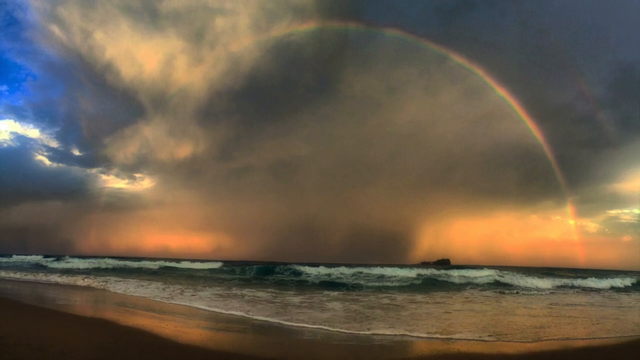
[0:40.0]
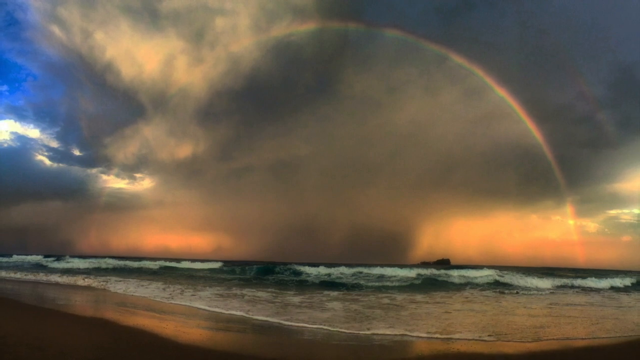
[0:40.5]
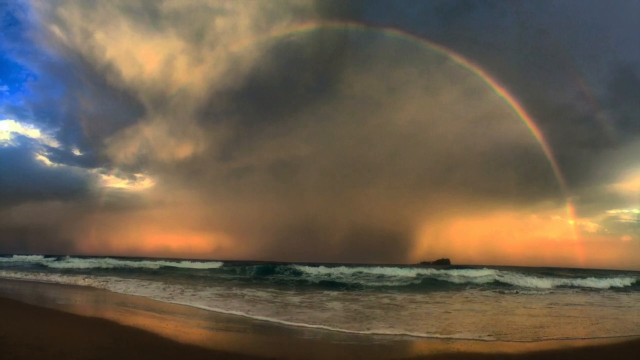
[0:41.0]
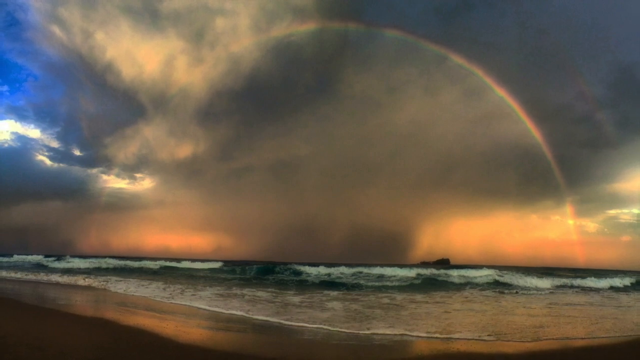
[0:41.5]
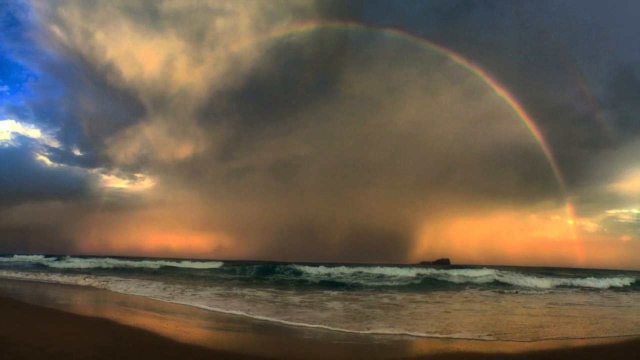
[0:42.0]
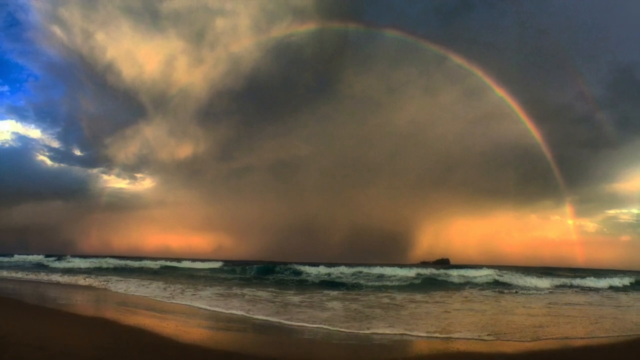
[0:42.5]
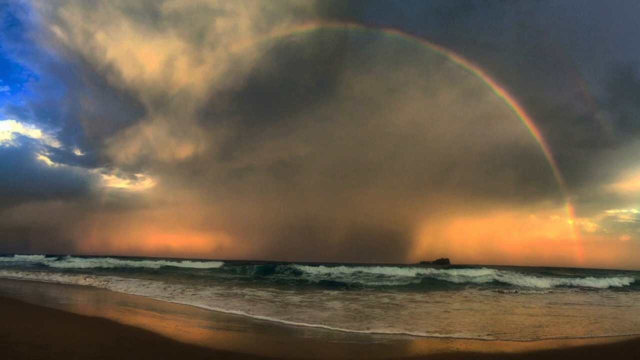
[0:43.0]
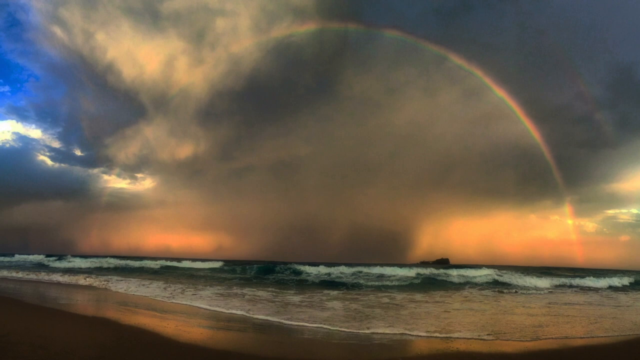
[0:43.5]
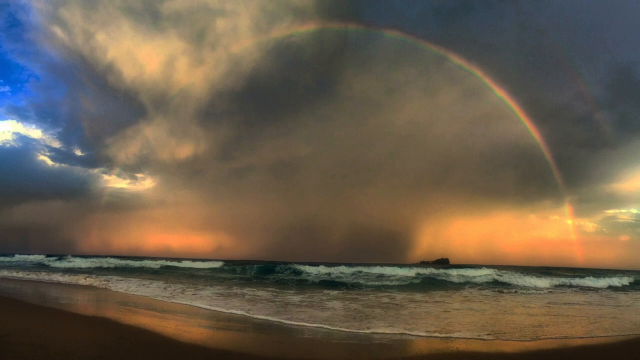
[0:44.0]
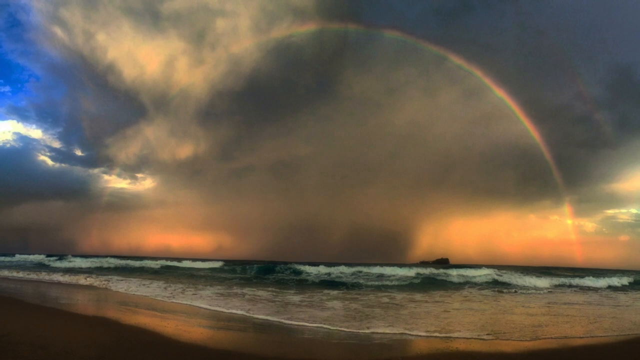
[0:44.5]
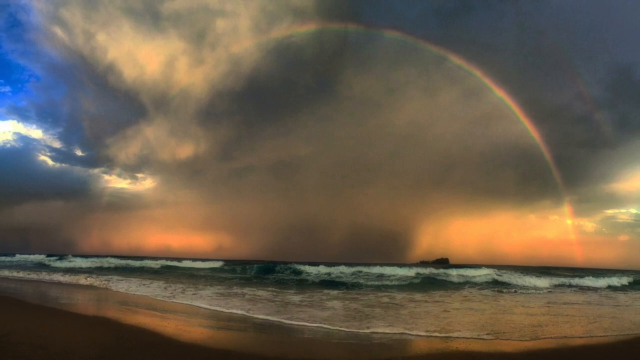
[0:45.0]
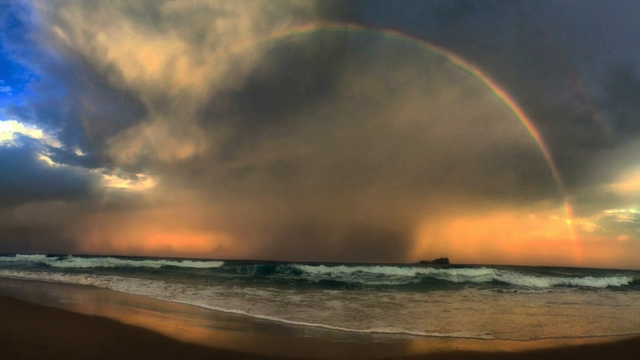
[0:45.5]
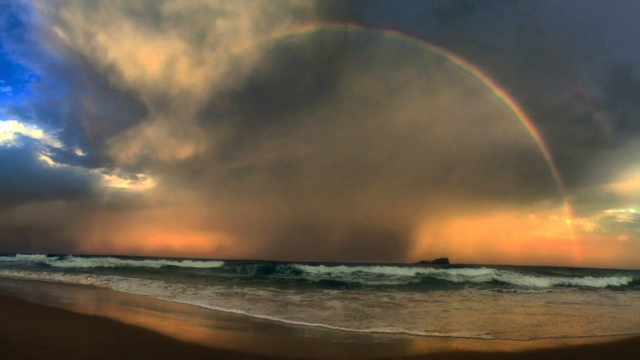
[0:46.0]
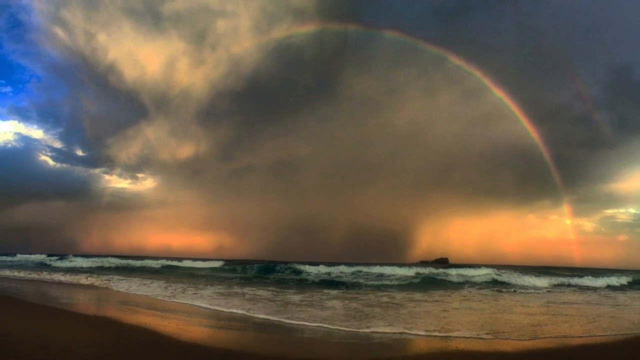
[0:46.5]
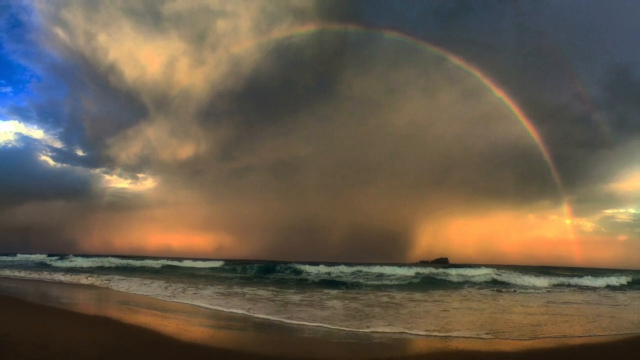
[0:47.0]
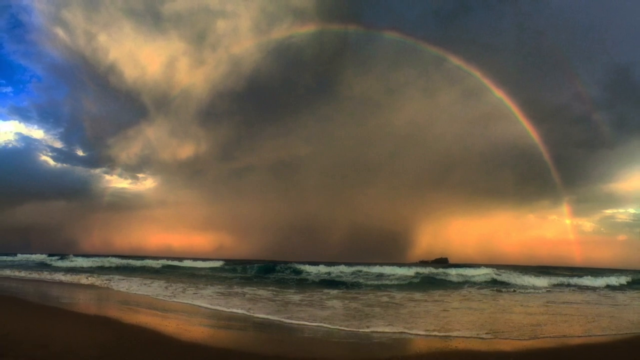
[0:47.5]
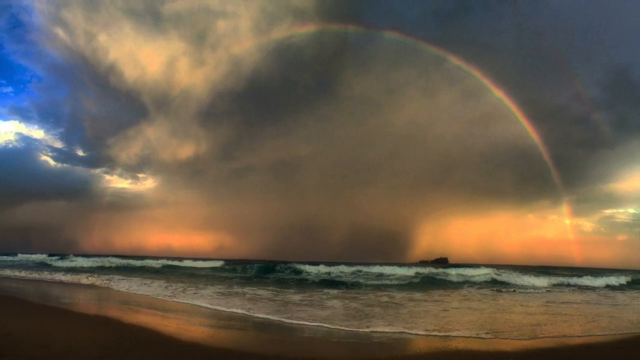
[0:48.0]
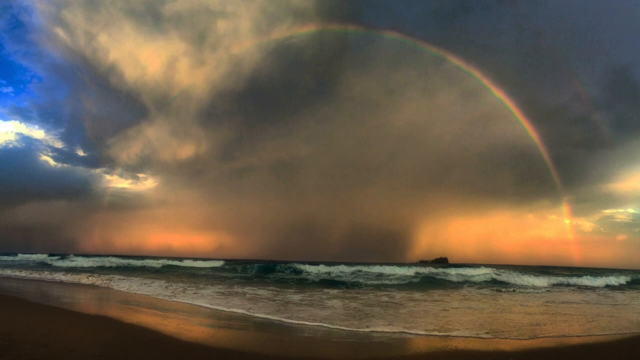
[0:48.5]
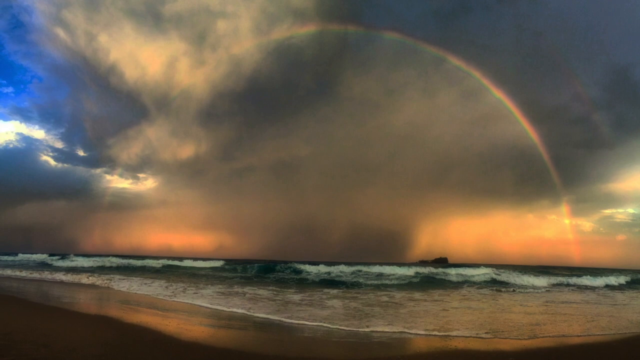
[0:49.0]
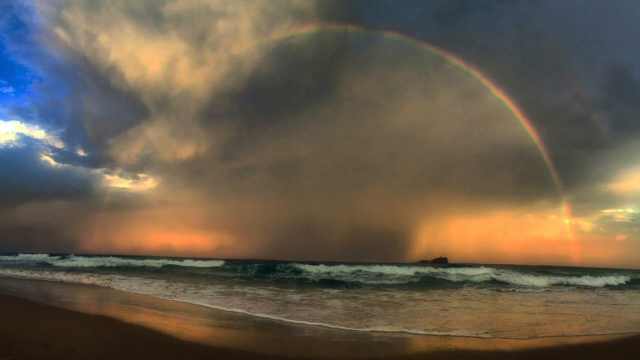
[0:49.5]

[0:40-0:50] The beach is in the foreground, dark gray with red highlights where the setting sun hits it. The tide is beginning to come in, shallow near the beach, and further out a large wave is beginning to break. A thick water spout goes up into the sky, with gray and white clouds above it. At the horizon the sky is red and yellow. The upper left shows some blue sky, and a rainbow arcs from end to end across the horizon.